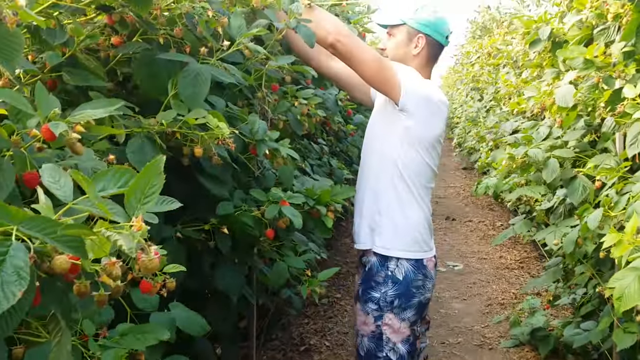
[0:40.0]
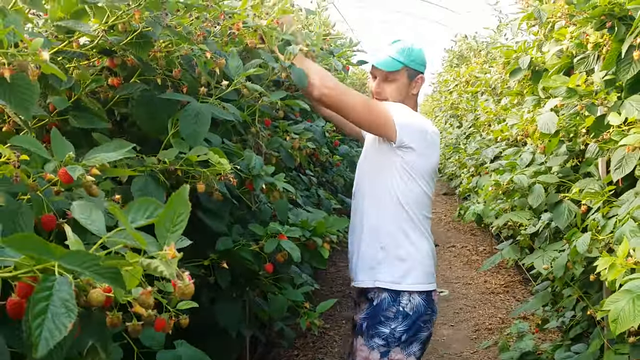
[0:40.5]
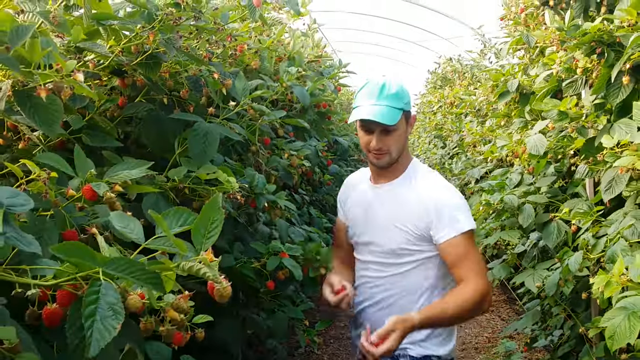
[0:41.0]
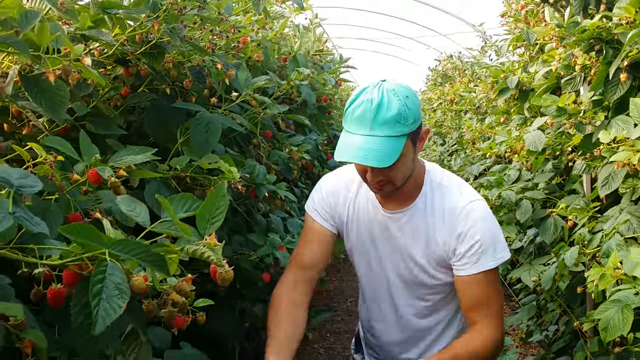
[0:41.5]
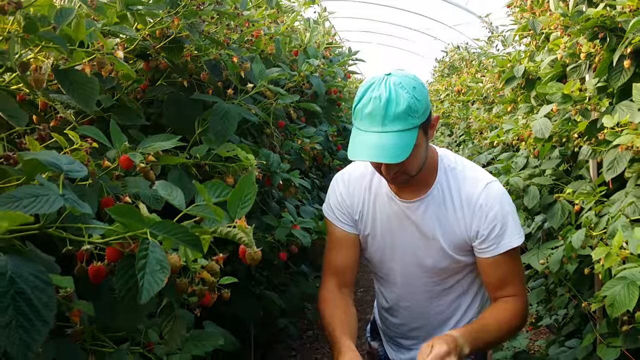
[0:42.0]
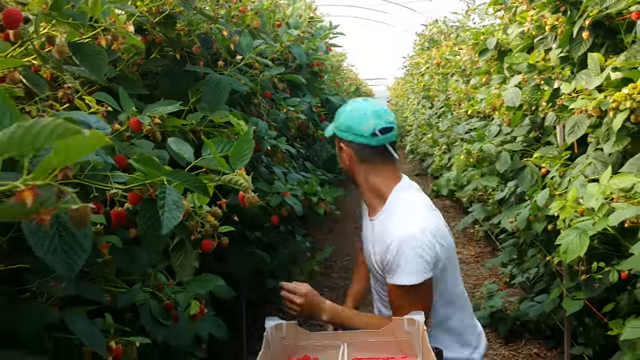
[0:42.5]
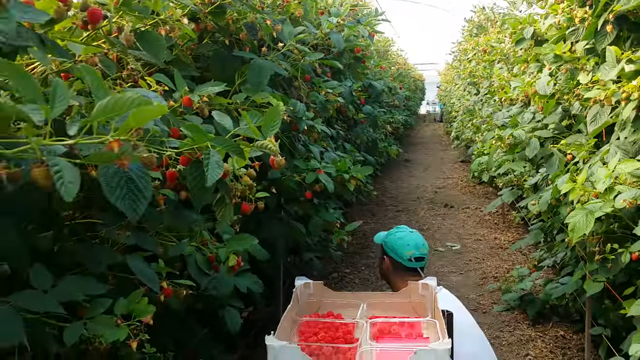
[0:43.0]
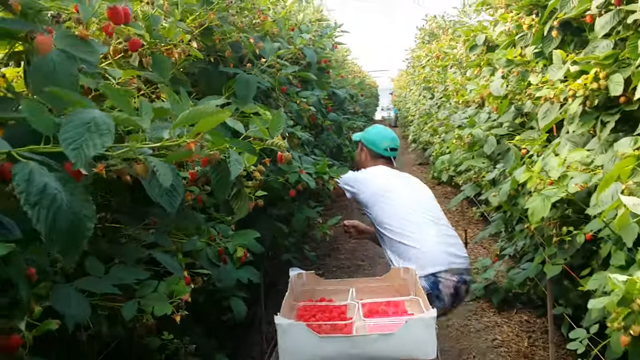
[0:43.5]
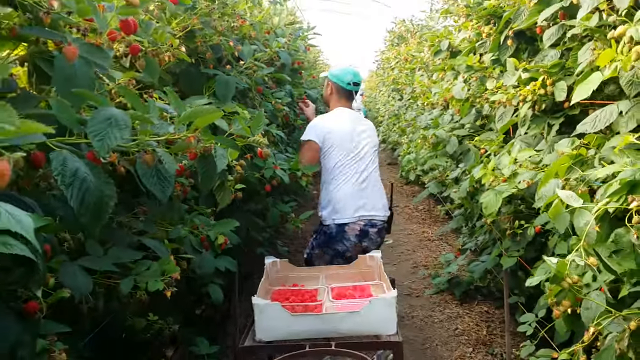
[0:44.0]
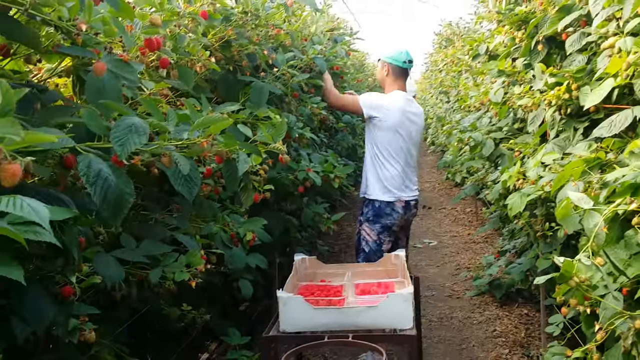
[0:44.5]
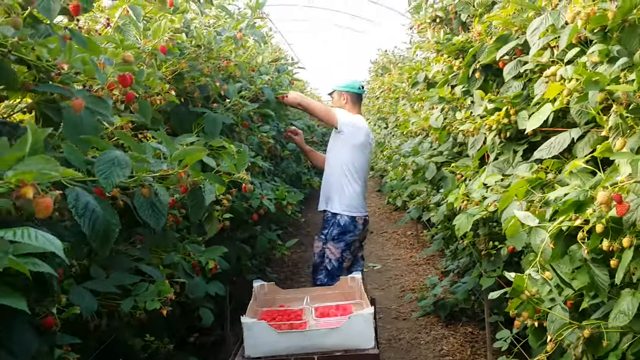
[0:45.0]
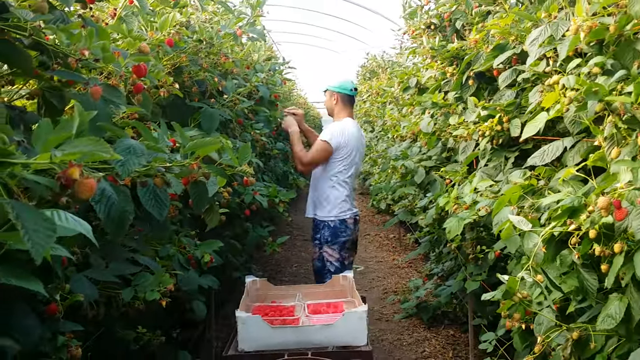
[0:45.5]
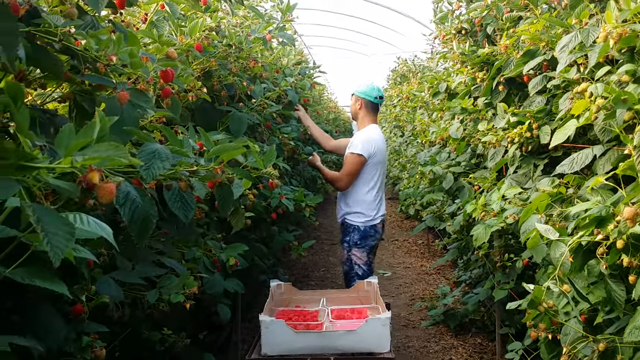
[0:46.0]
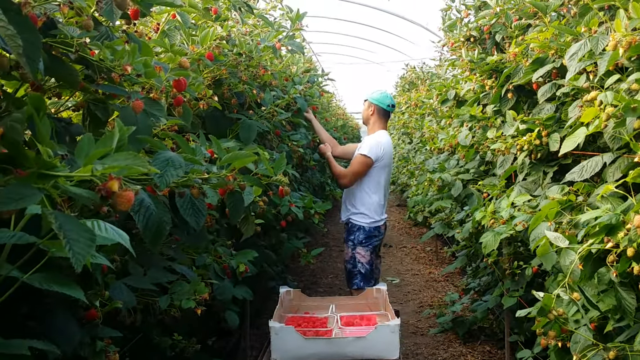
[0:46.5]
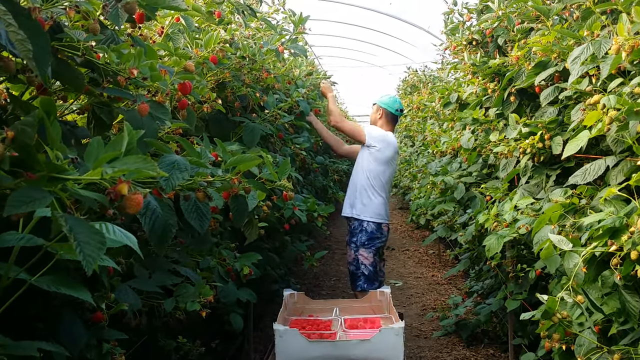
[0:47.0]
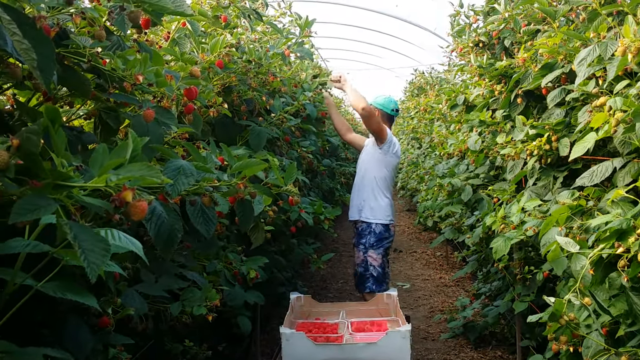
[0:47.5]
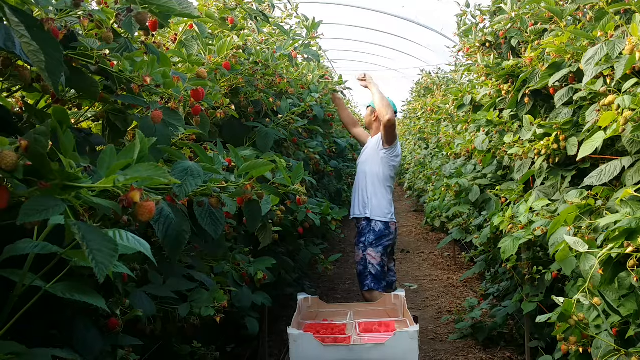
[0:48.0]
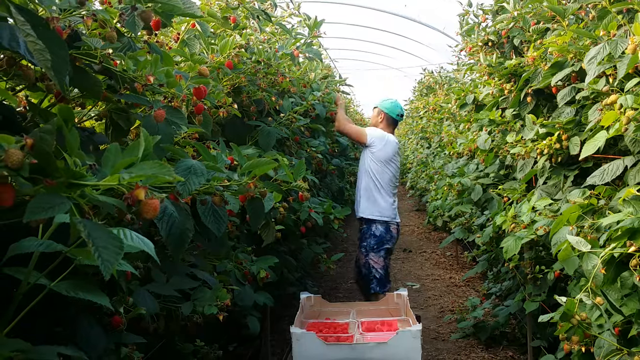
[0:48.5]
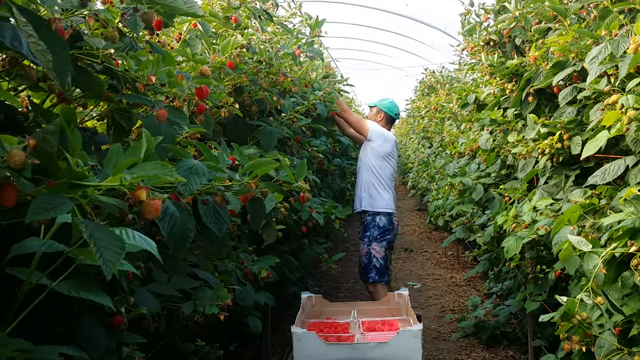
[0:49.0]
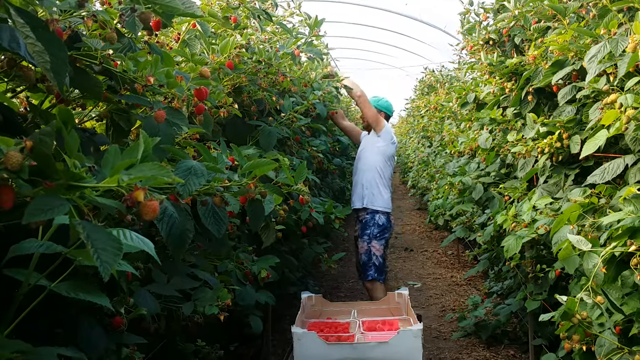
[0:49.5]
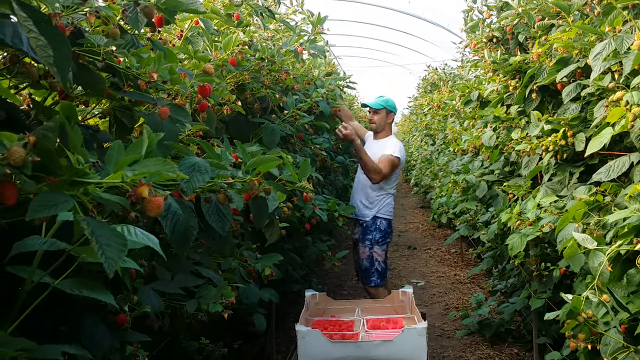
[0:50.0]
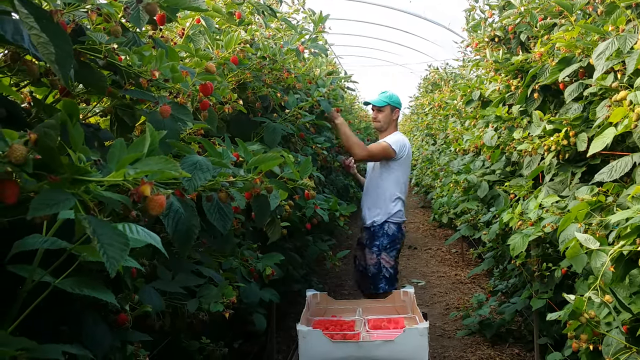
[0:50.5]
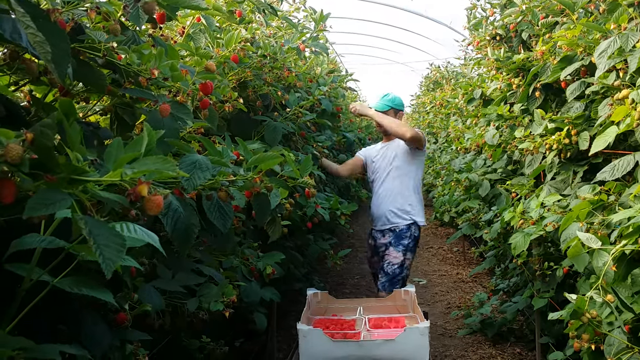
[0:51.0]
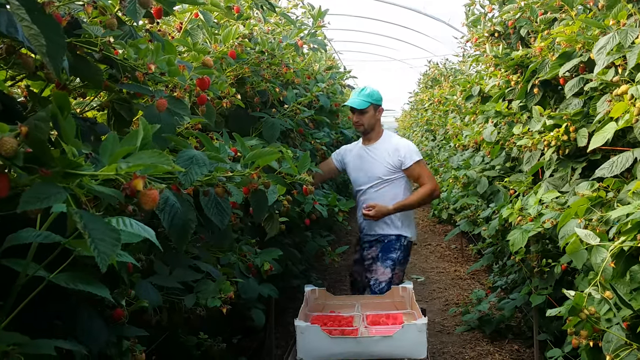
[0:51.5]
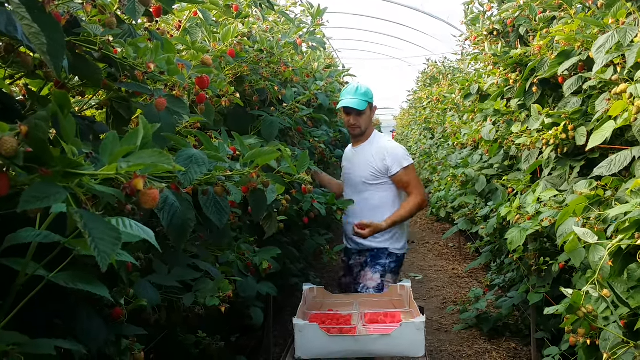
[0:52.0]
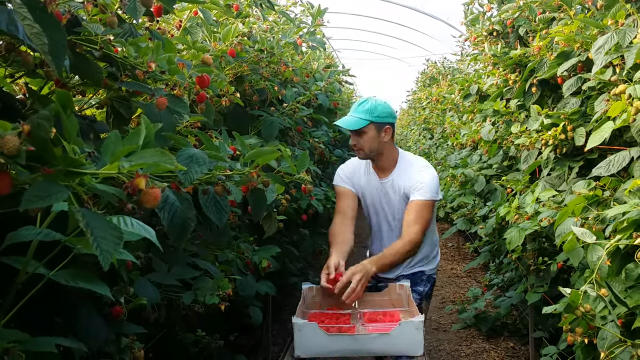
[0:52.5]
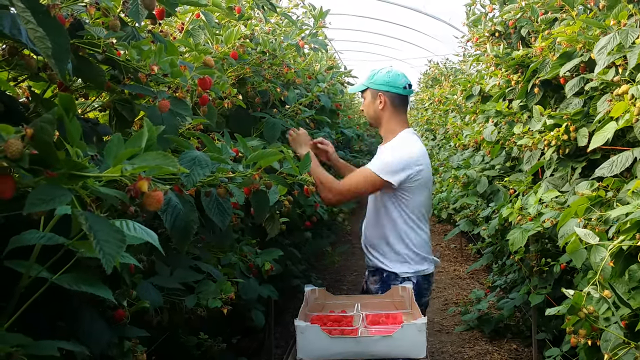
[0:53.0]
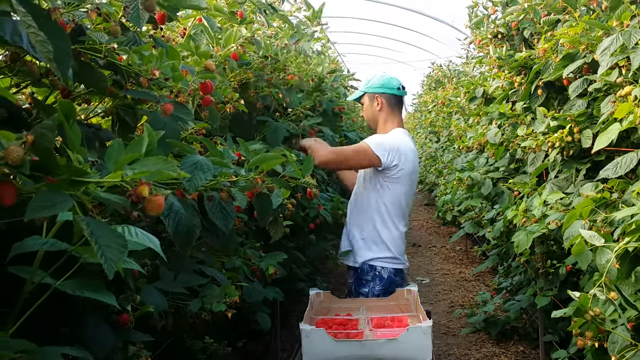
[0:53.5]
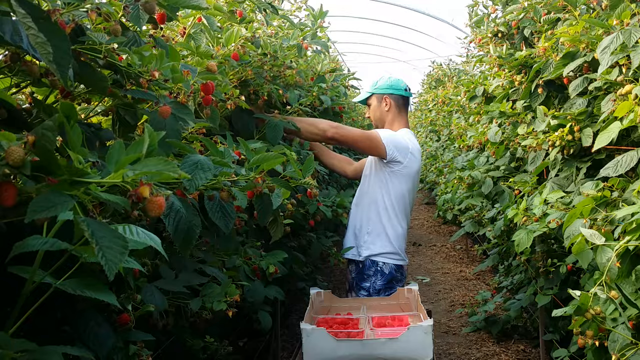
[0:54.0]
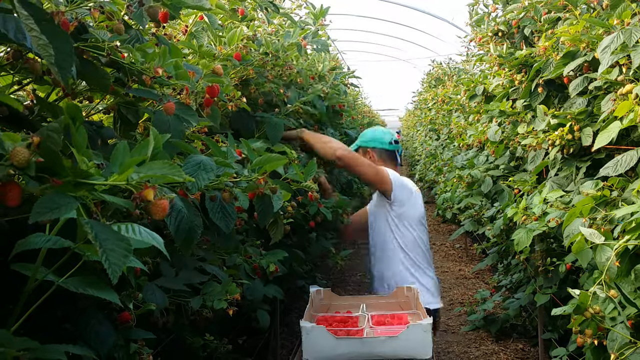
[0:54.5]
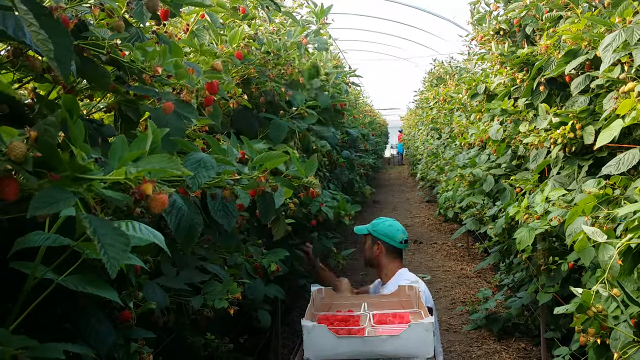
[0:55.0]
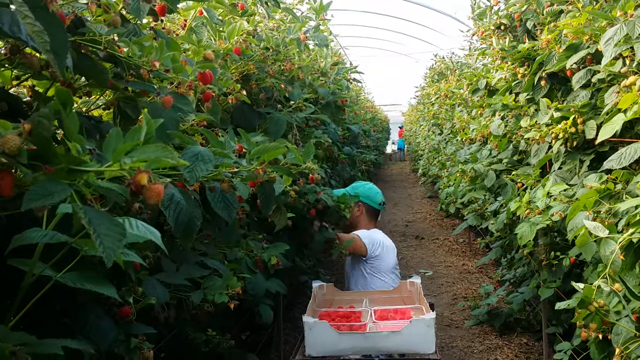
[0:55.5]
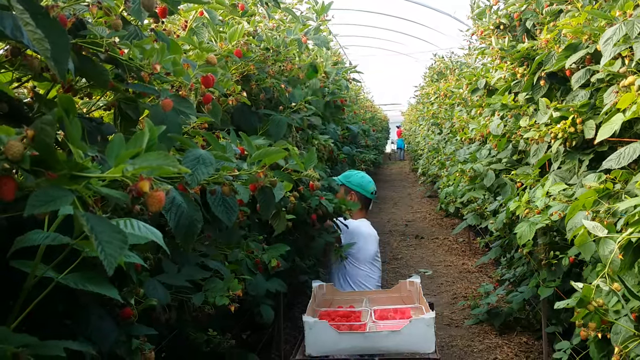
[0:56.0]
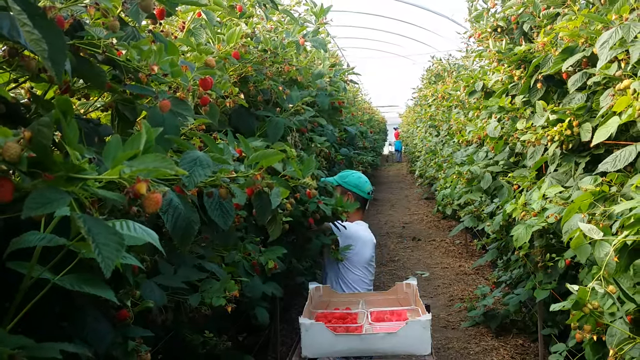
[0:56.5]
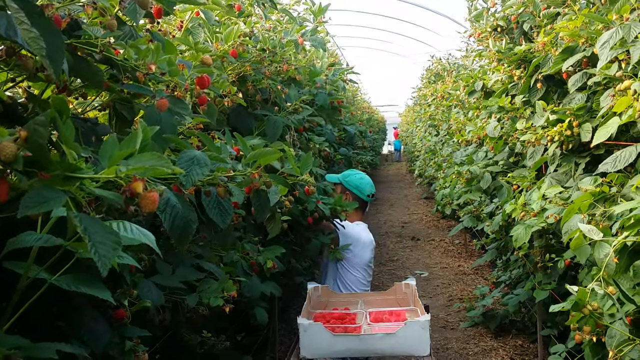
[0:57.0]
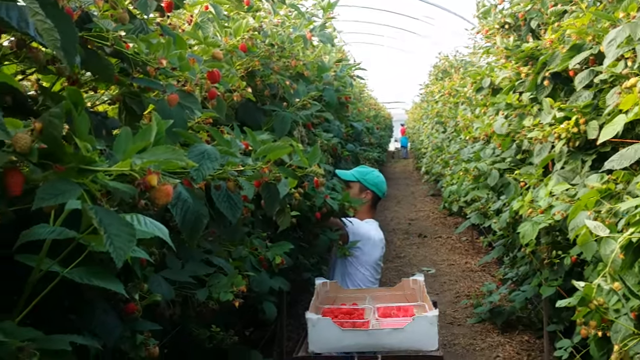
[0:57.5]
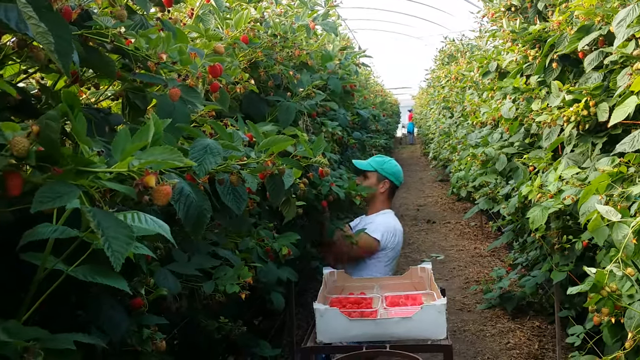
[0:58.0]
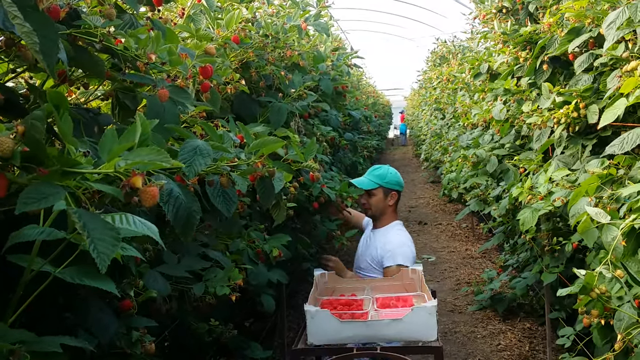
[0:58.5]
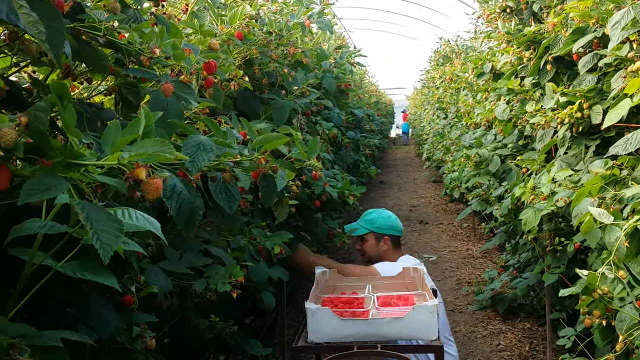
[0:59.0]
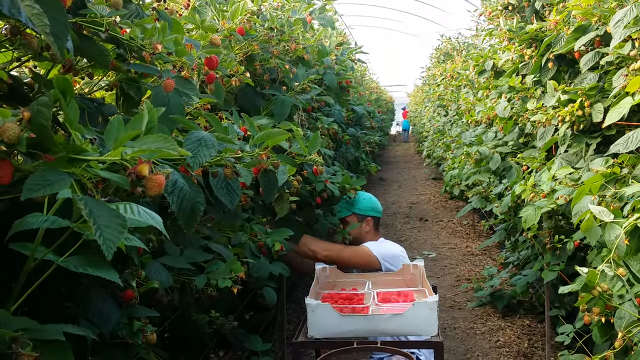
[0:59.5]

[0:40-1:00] The same man wears a light mint baseball cap, a white short-sleeved t-shirt, and floral shorts with pink and white flowers and blue leaves. He has a thin black beard and mustache, and black hair shows from under the sides of the cap. He first looks down, then moves back over toward where he originally started picking raspberries, picking anywhere he can see berries. When he bends down, apparently a woman is visible far in the back on the right side, doing the same thing to the bushes on the right. The place seems to be a see-through greenhouse: overhead there are bars with clear sections in between, and sunlight touches some of the bushes.